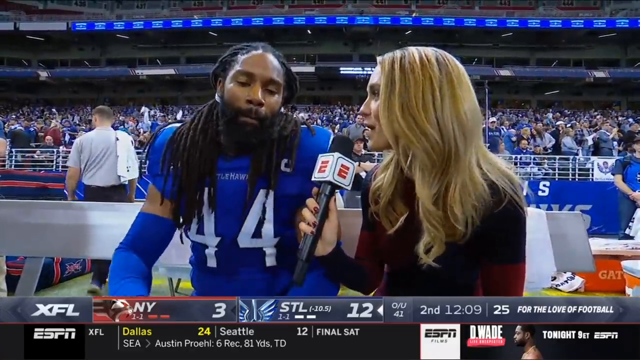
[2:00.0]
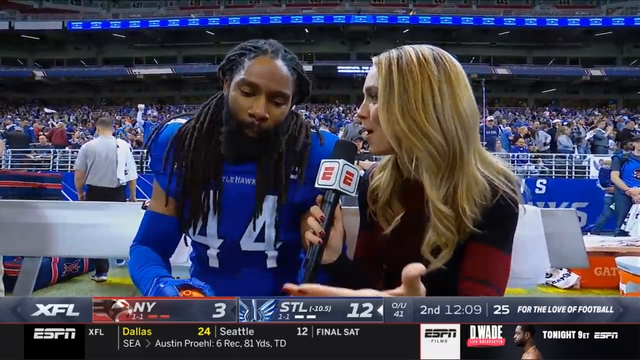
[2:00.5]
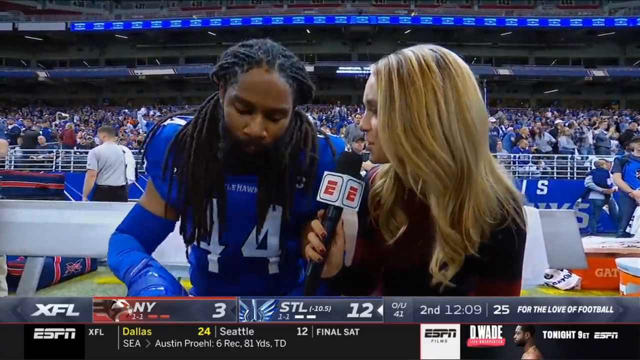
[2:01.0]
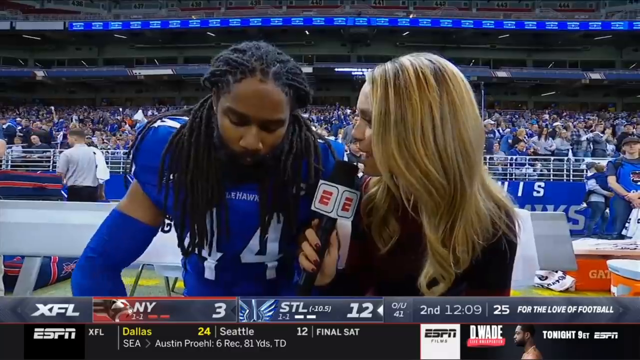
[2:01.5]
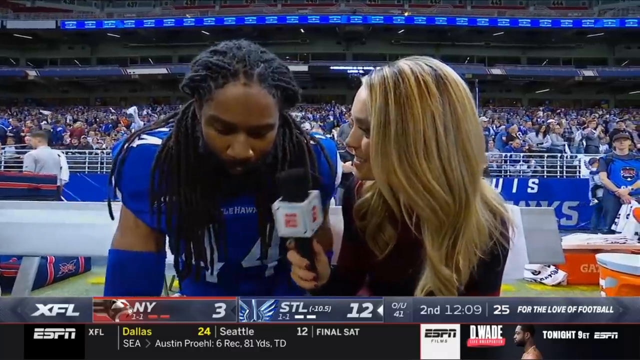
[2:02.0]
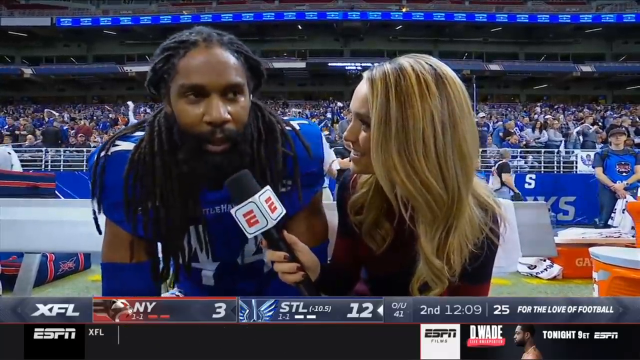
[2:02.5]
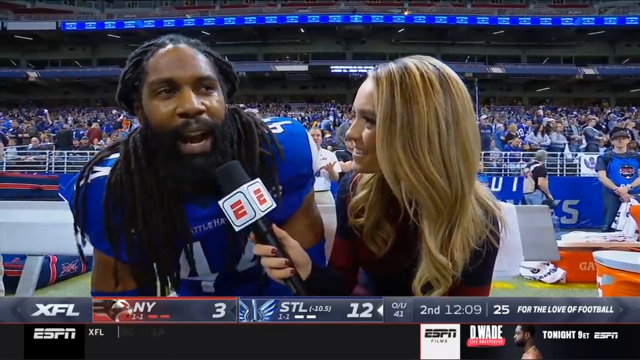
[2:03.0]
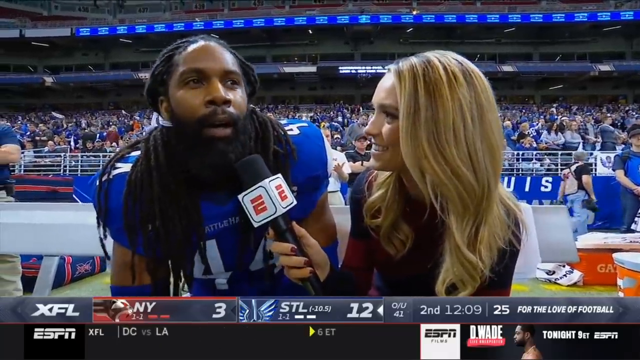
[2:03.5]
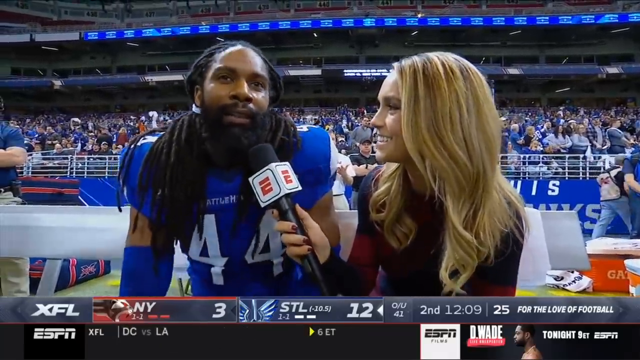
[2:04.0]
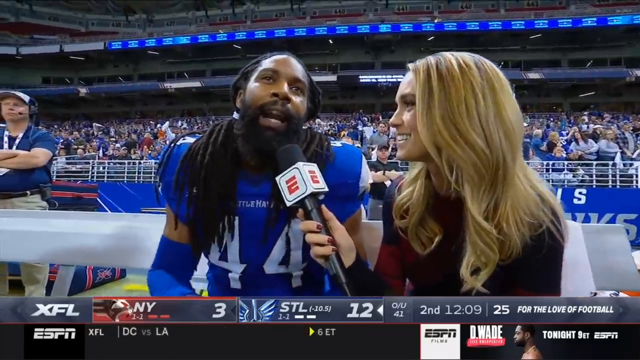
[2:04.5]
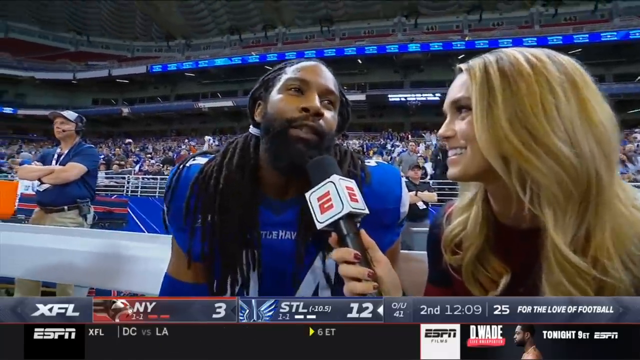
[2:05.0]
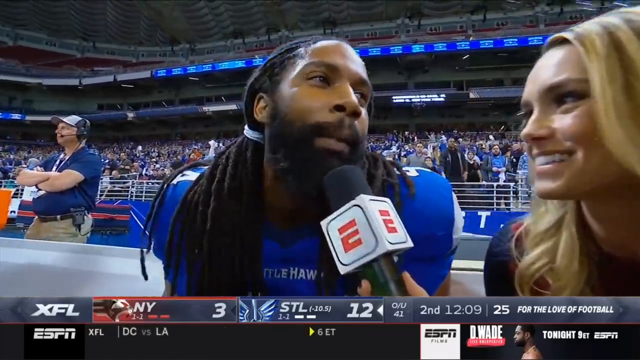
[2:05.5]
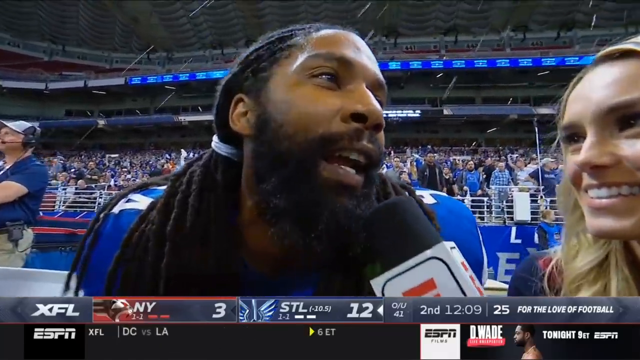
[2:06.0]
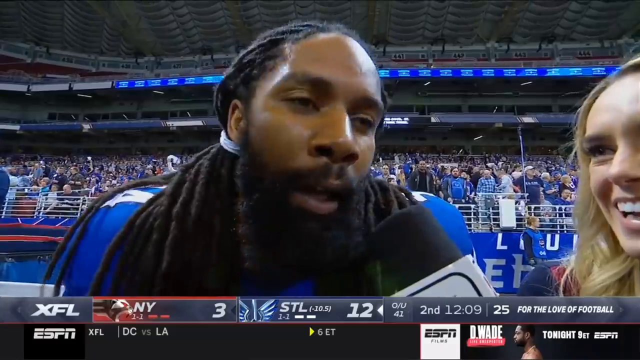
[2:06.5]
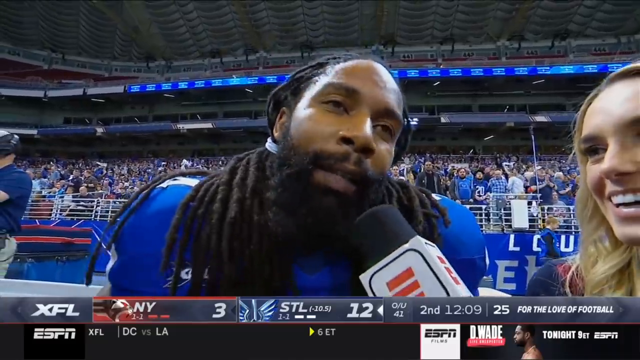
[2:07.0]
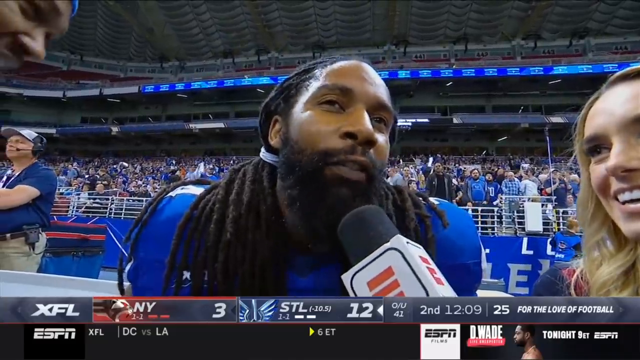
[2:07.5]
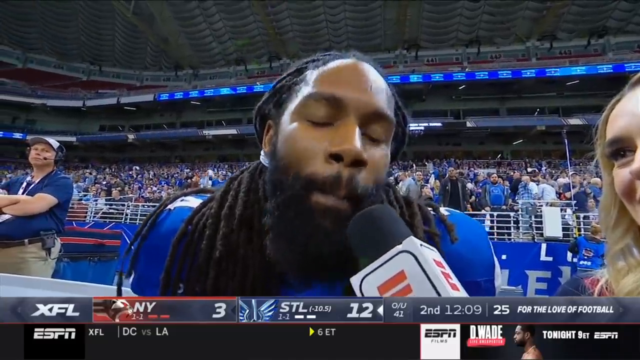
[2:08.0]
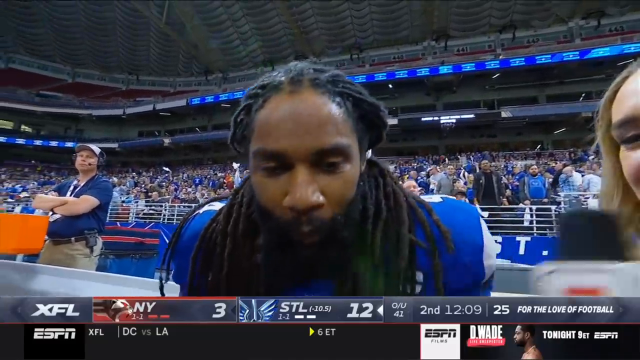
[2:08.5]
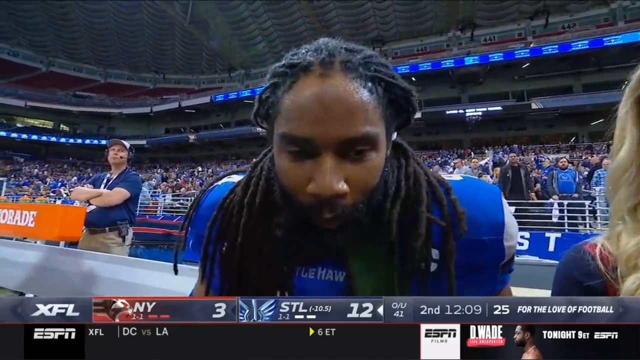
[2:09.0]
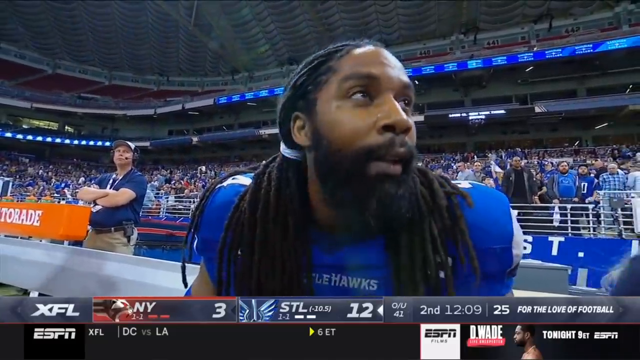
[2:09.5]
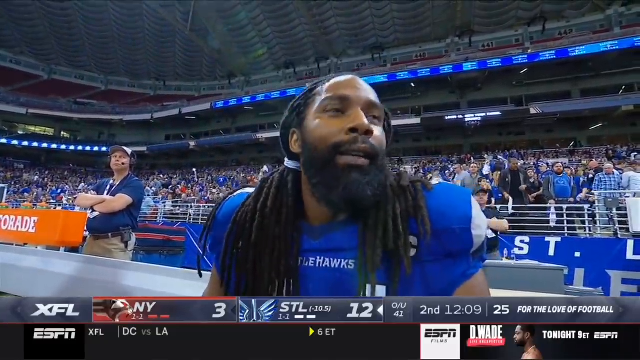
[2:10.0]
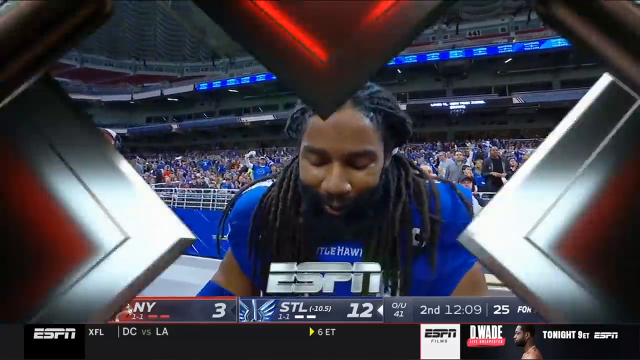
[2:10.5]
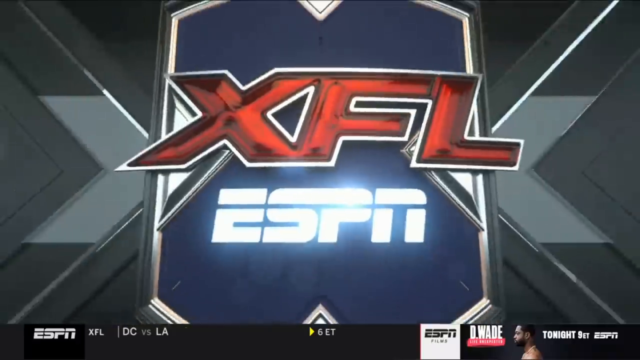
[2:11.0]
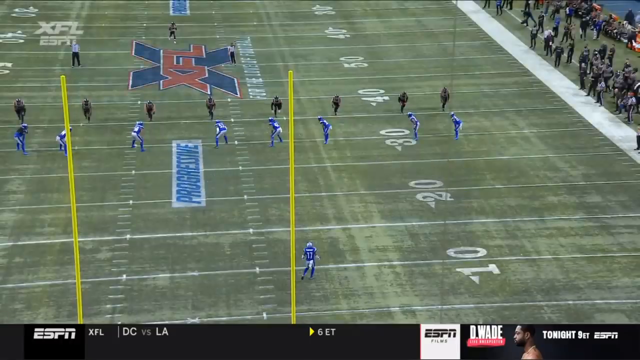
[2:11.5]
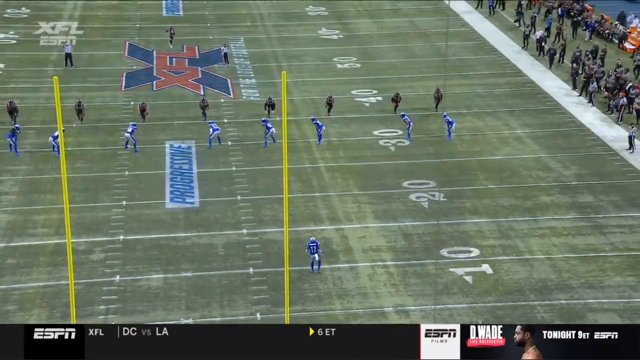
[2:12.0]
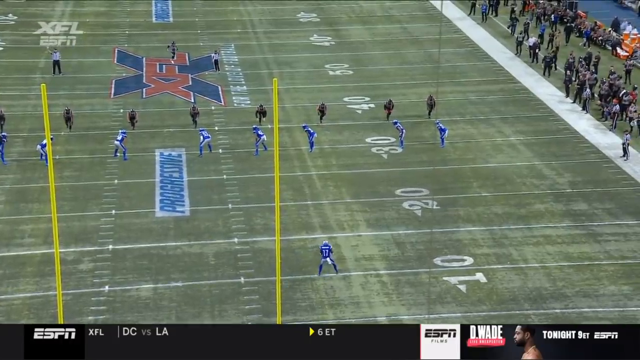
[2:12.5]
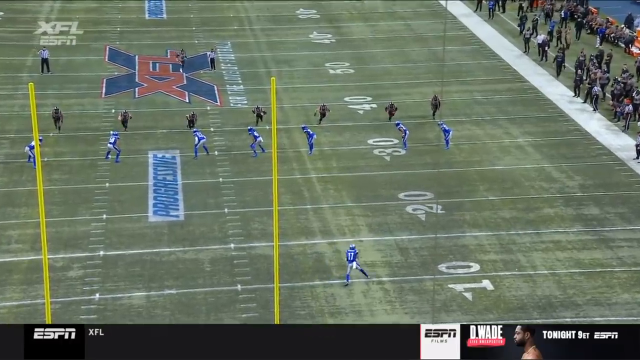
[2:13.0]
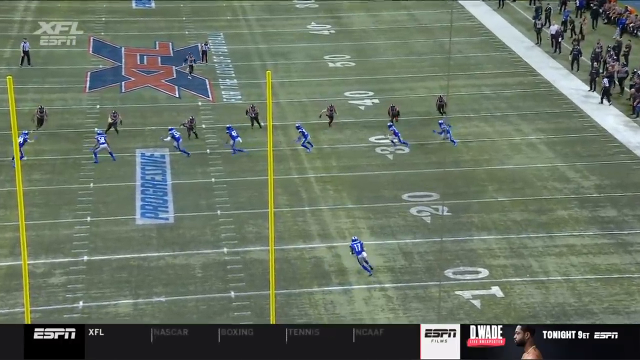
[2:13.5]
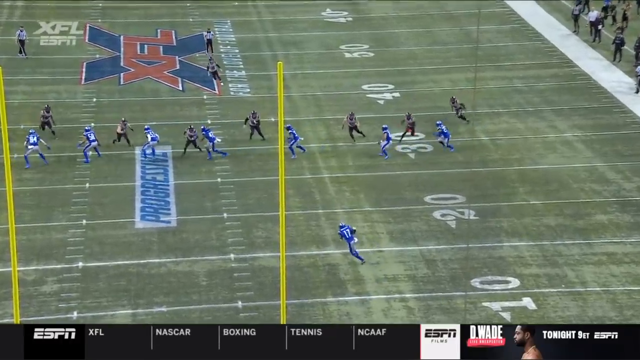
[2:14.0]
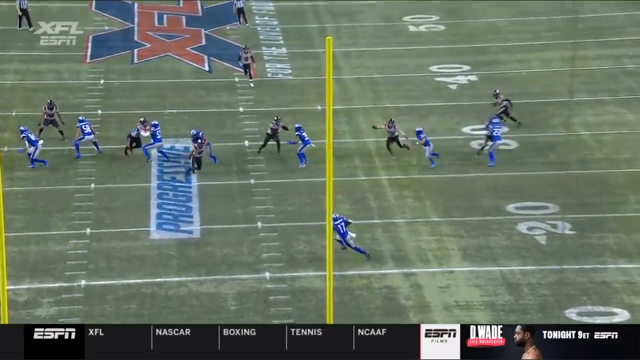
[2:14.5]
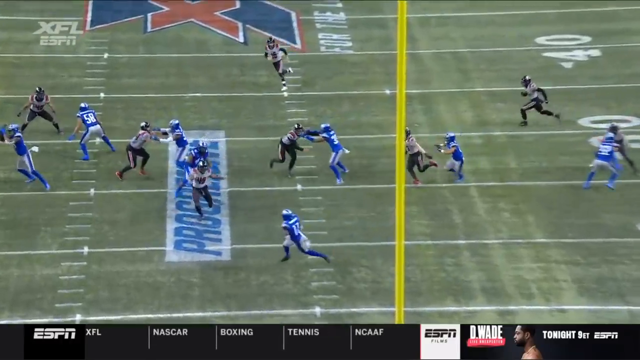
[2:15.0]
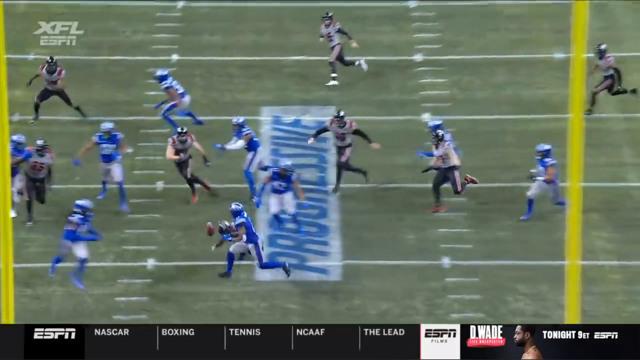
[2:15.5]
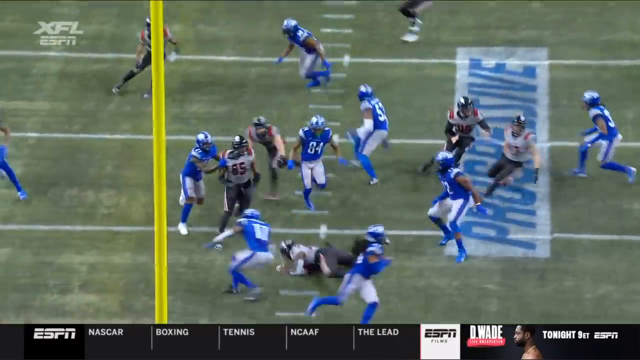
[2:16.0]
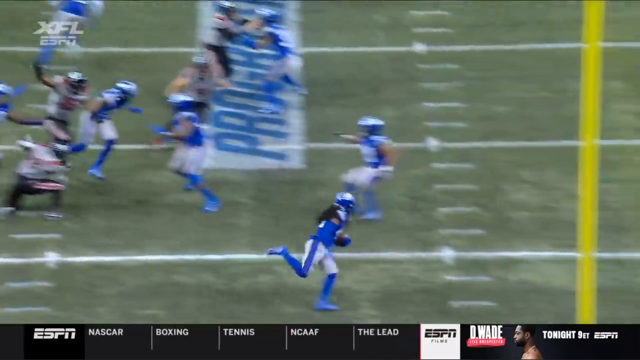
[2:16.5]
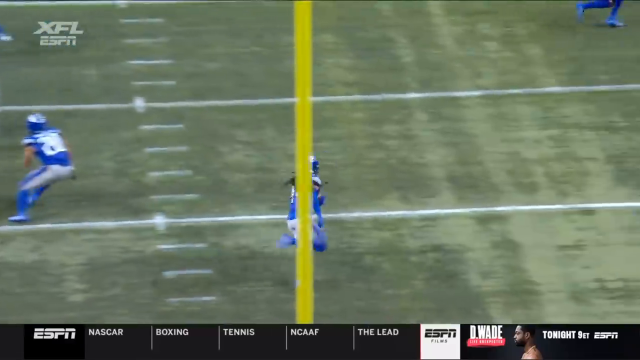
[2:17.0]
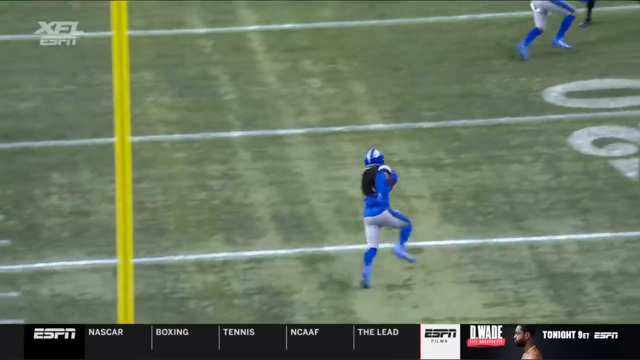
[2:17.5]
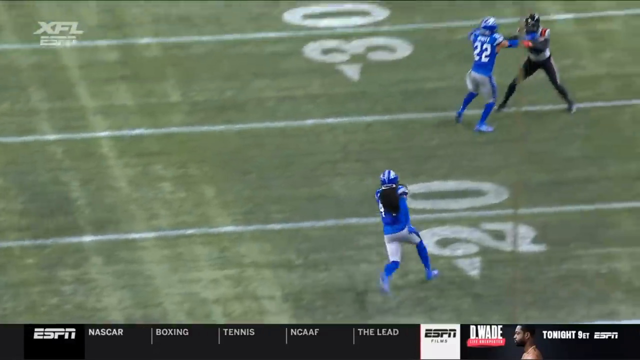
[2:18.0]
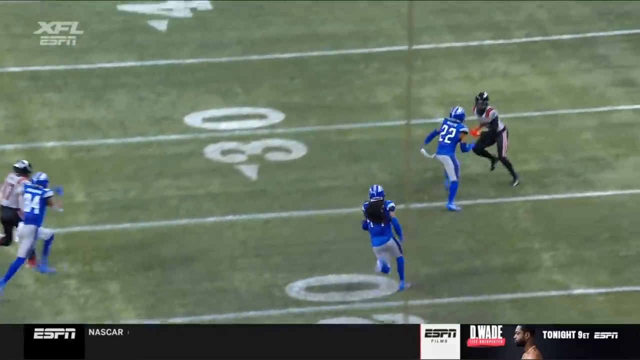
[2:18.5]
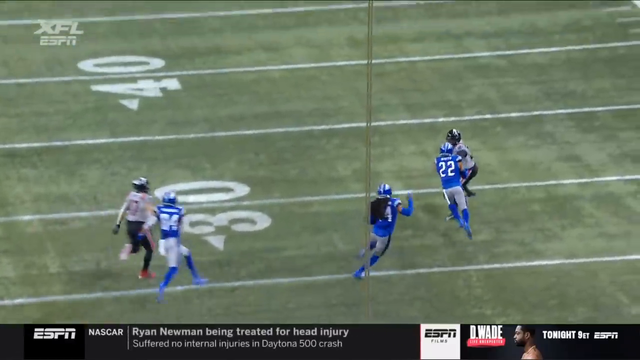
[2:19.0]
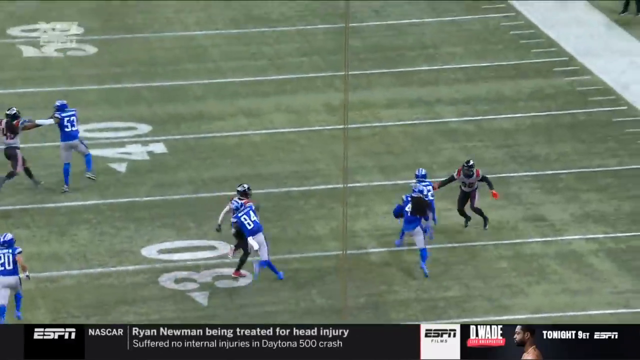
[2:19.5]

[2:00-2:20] An XFL football game opens with one team, in black, white and red jerseys, kicking off. The blue and white team called the Battle Hawks catches the ball; a player throws it to another, who runs it in for a touchdown. The players cheer and jump on each other, and the fans cheer. The field has "XFL" and "progressive" on it. Fans wearing hawk outfits cheer. A sportscaster is shown up in the box at the top of the stadium. A split screen shows a referee in a black and white striped shirt with 81 on it, talking and pointing, then throwing his right arm down. The Battle Hawks go for extra points and miss. The player who scored is interviewed by a lady from ESPN. A replay of the touchdown follows and goes into slow motion, ending the video.